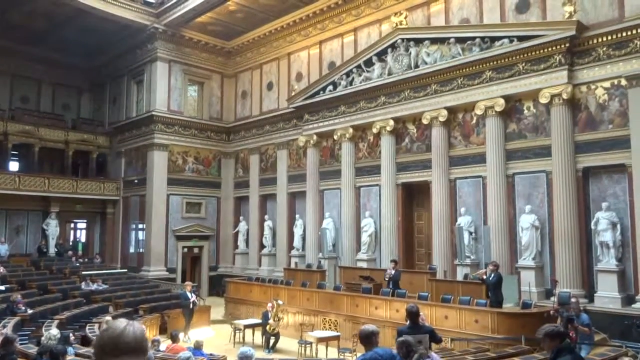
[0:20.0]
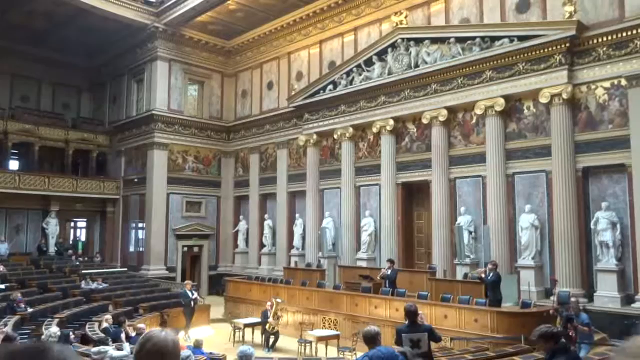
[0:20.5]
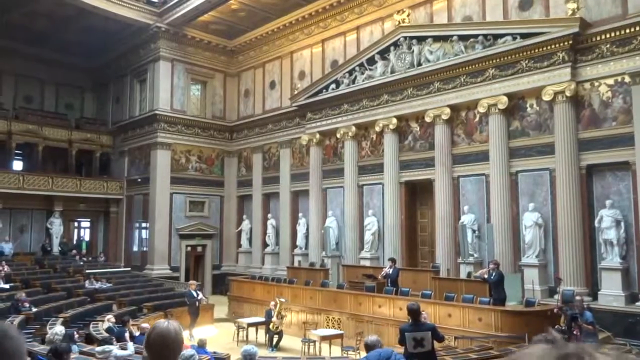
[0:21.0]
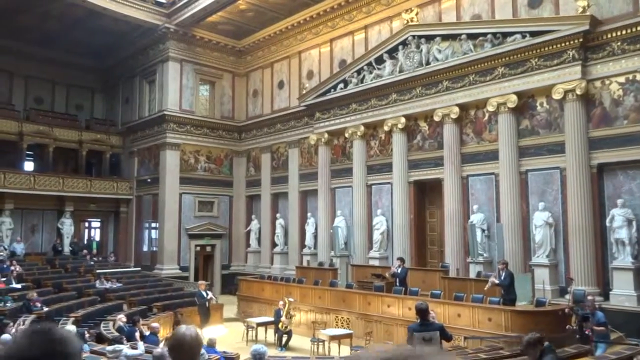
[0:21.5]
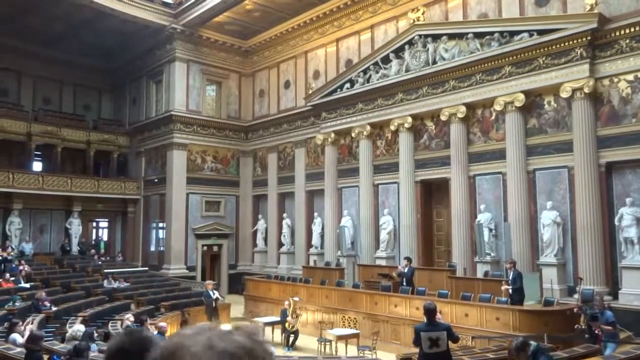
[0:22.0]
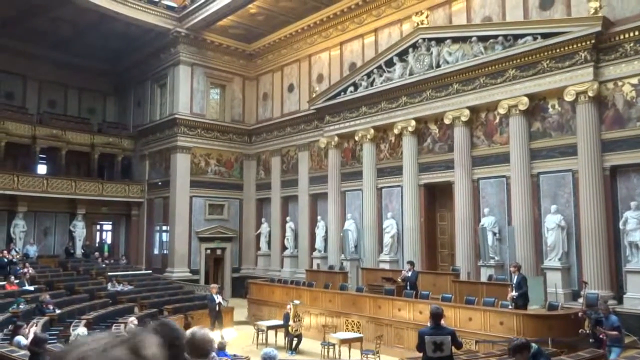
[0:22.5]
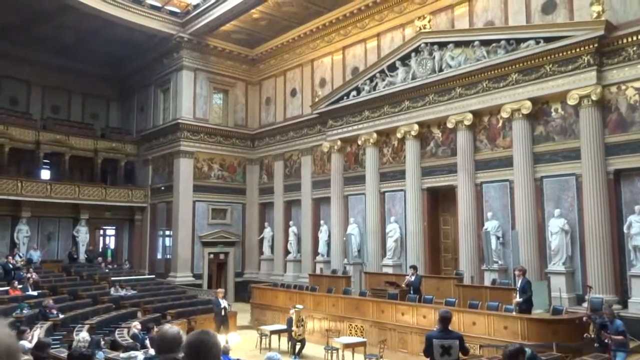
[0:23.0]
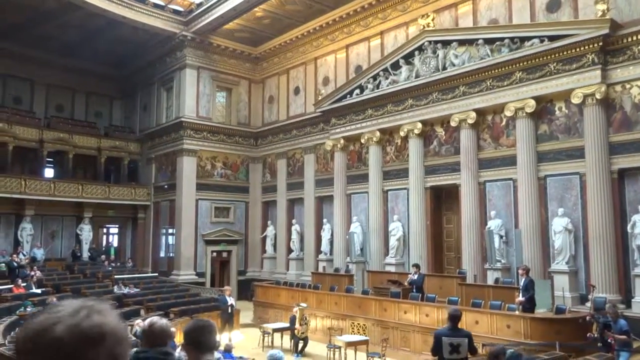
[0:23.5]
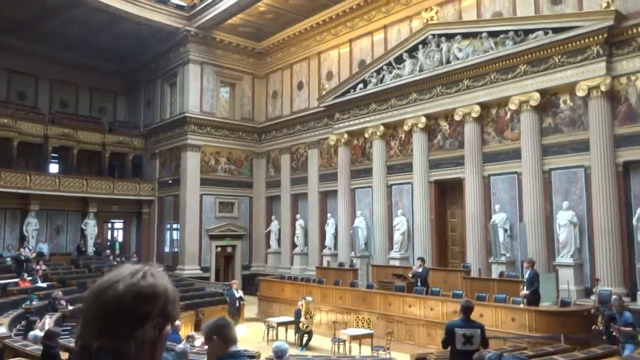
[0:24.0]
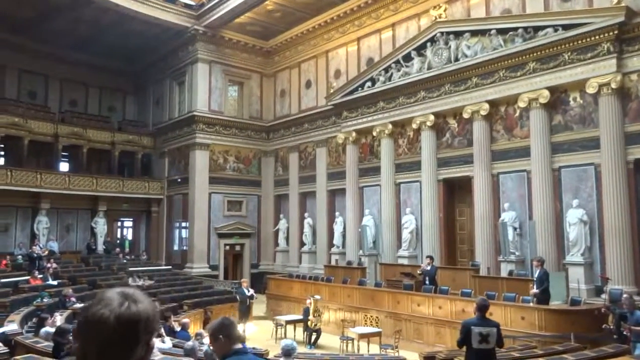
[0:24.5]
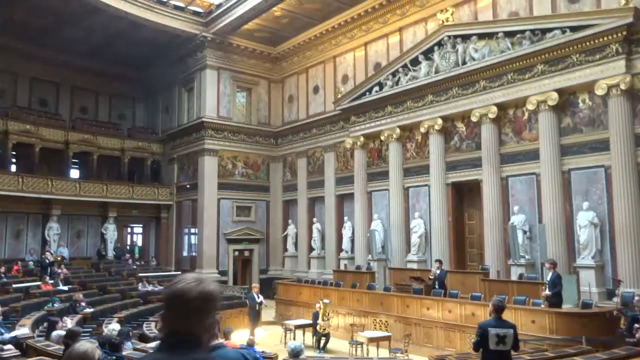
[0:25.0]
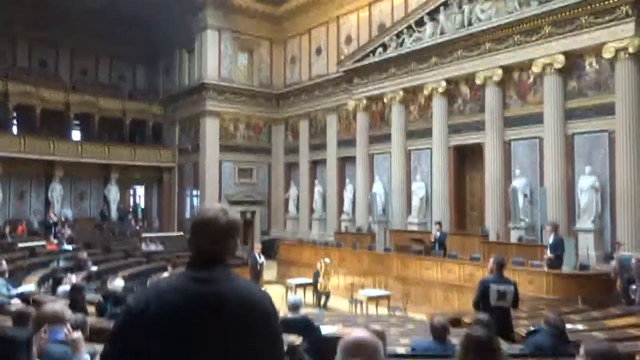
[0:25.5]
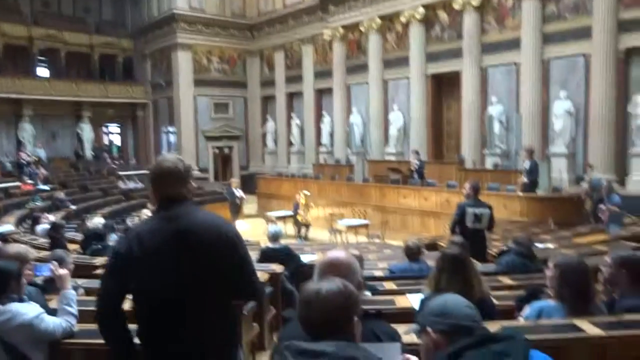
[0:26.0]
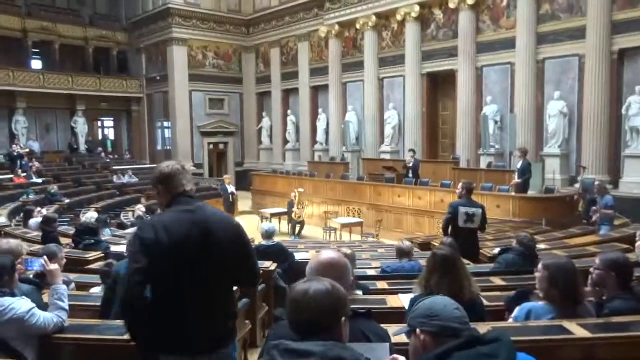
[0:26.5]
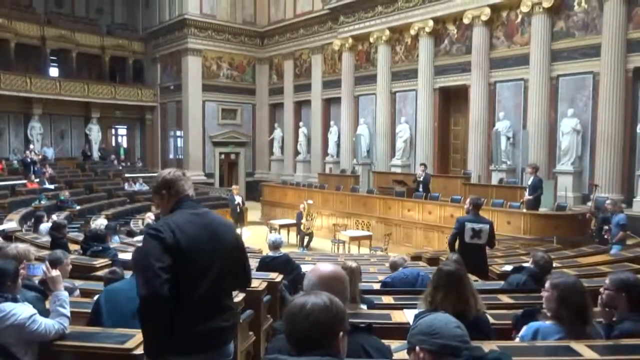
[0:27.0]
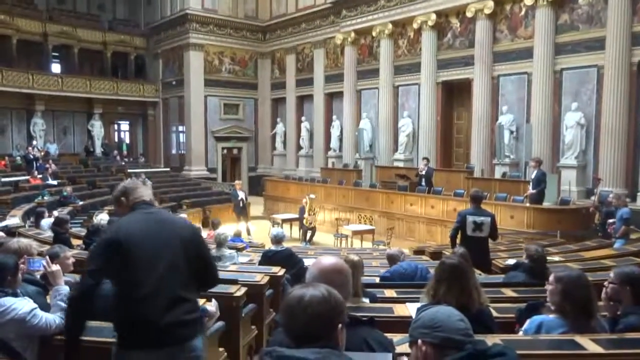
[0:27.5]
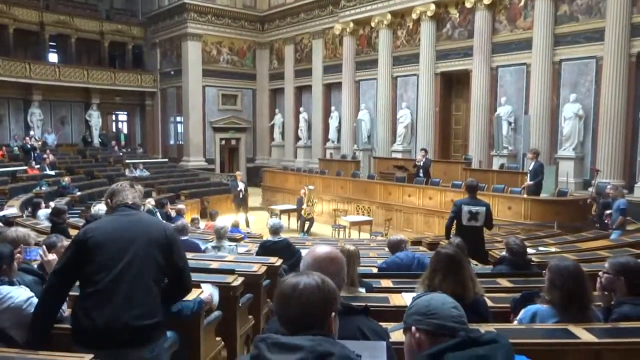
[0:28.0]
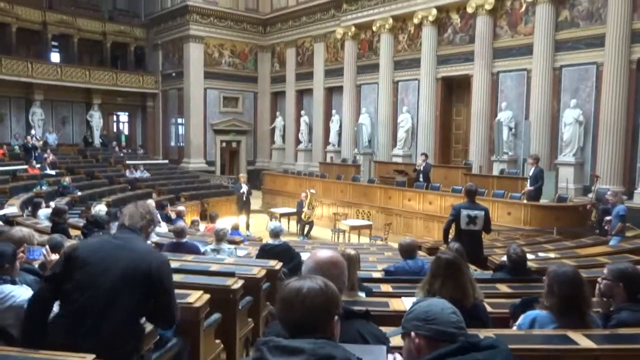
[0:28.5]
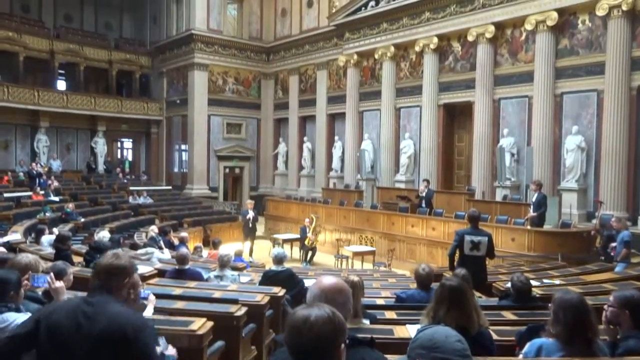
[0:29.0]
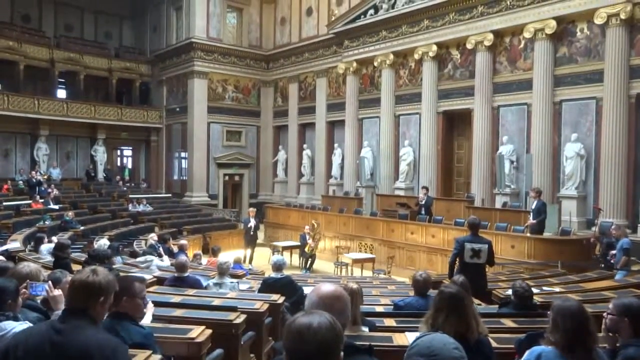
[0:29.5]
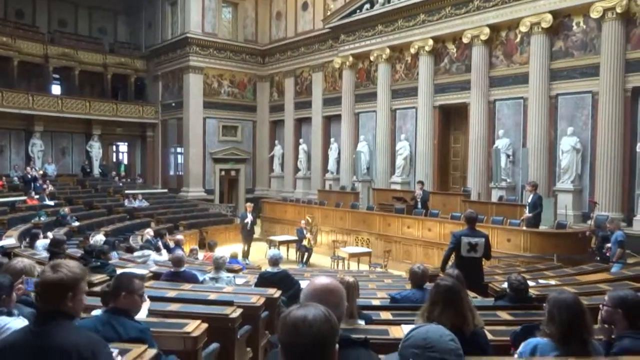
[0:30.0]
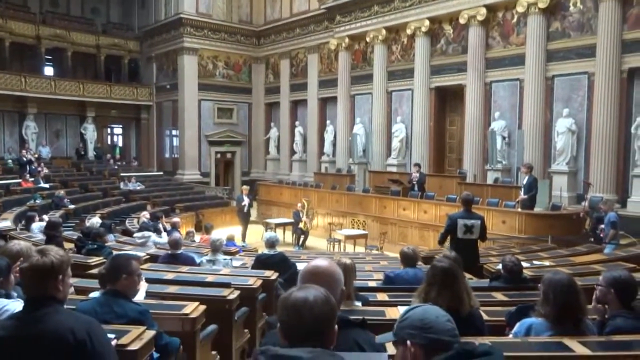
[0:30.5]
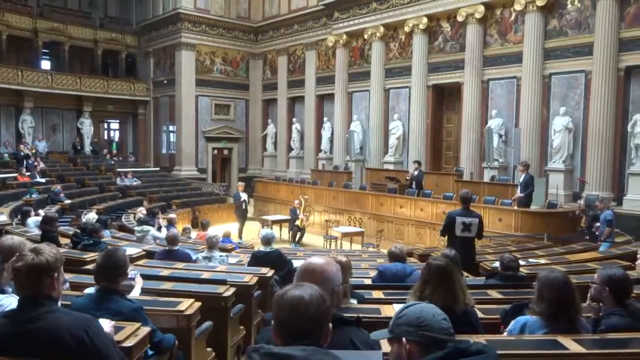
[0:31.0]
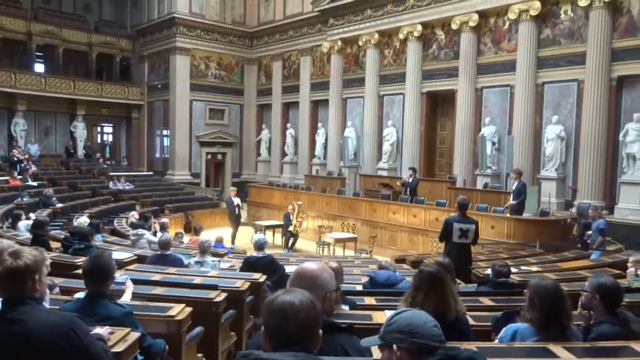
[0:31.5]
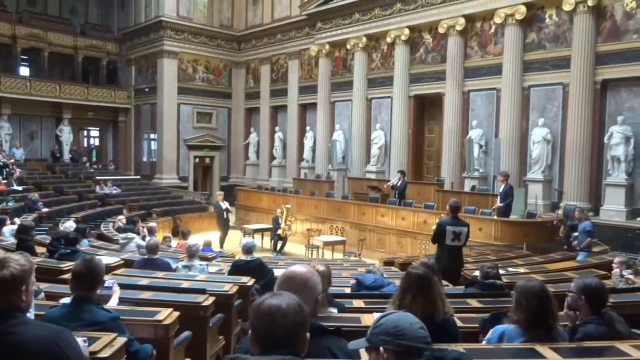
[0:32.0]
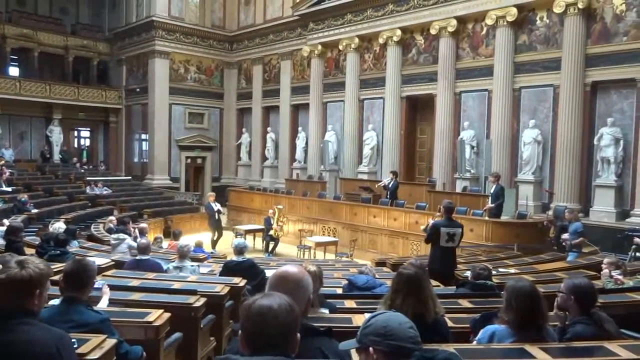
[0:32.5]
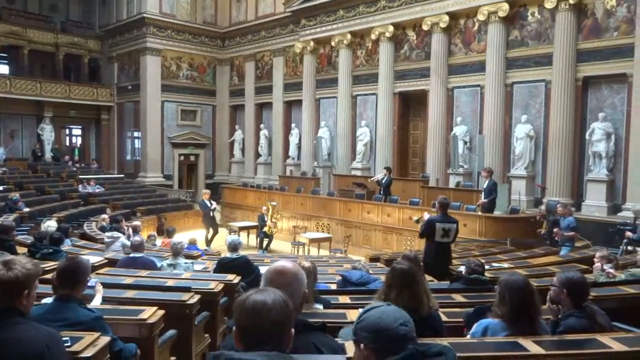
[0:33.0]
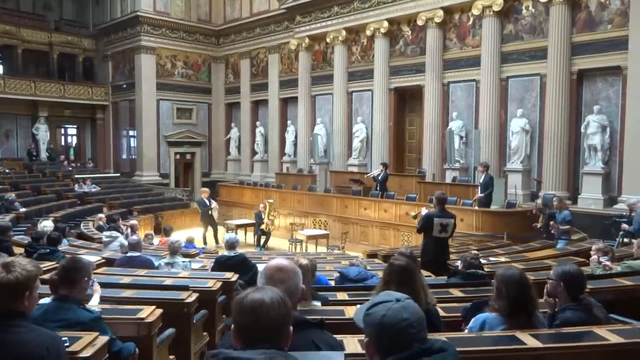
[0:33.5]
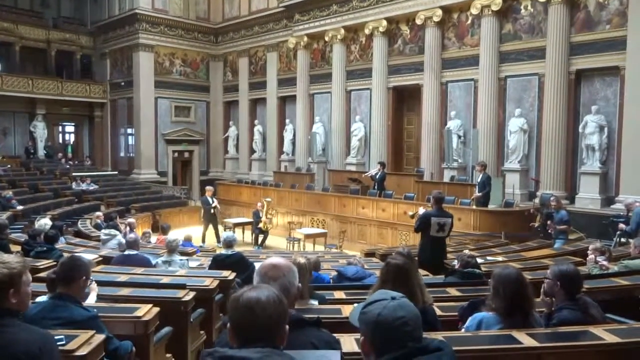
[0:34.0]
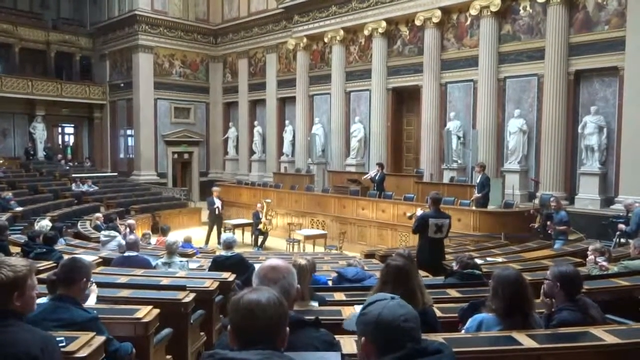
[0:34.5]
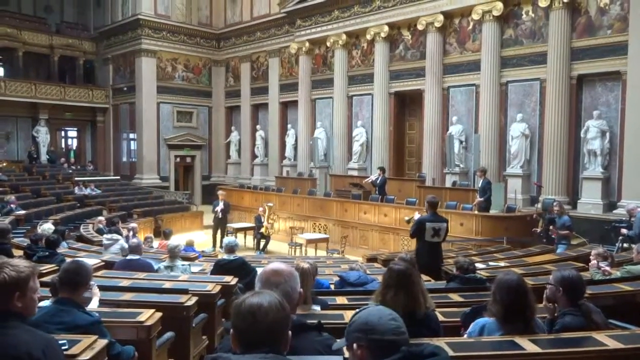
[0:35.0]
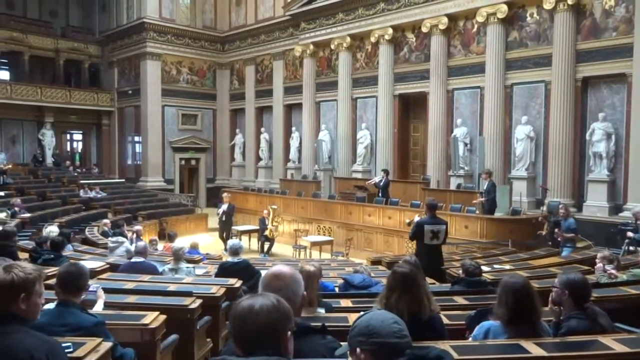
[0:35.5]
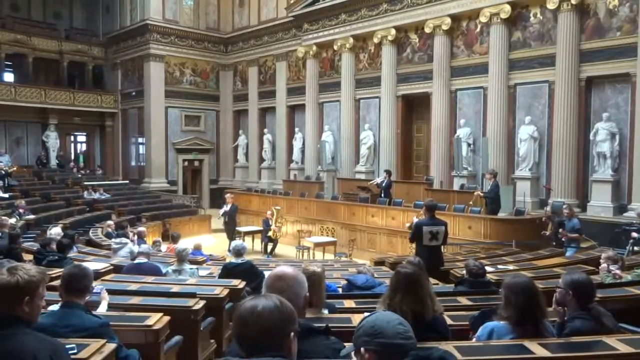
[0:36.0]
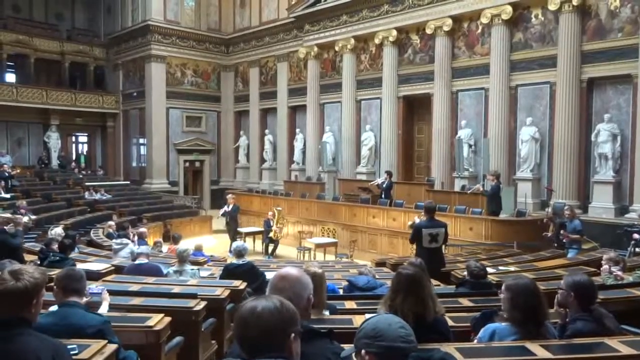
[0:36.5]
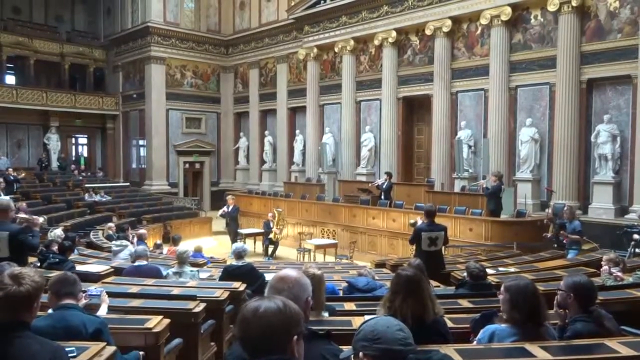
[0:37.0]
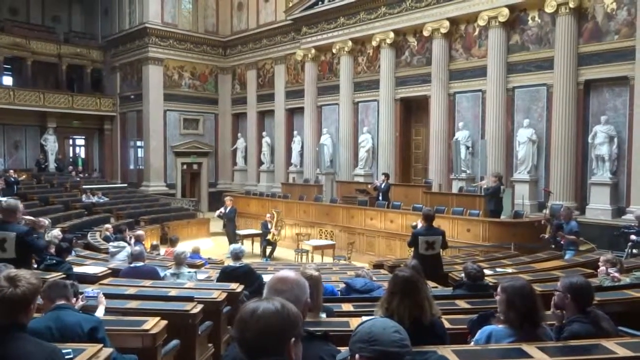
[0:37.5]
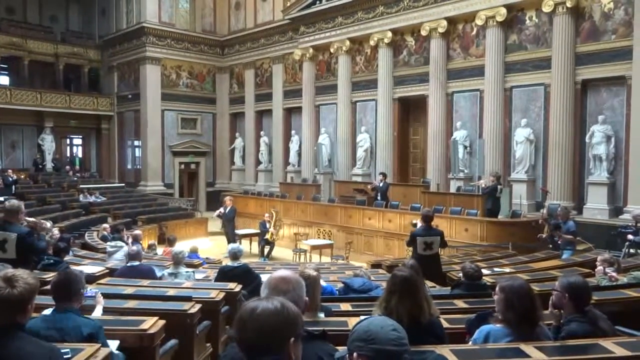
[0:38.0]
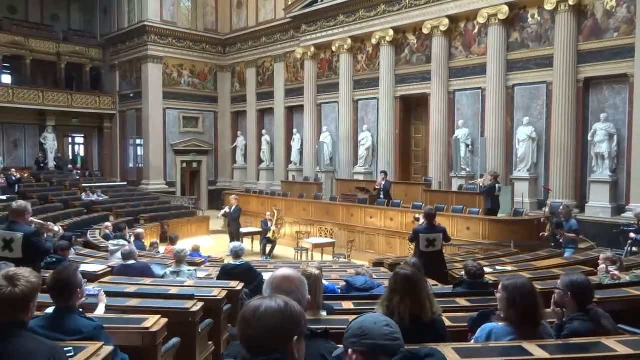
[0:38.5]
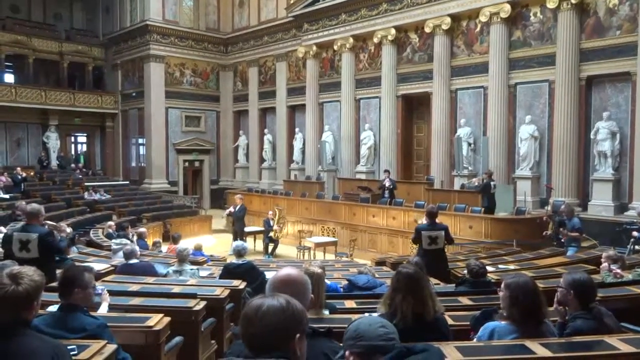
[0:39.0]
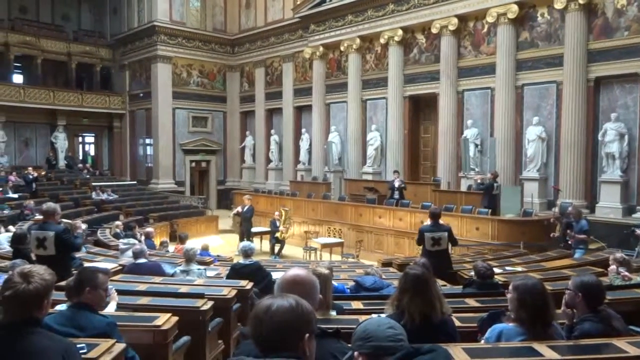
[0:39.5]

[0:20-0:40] One person is behind the chairs in front of the big podium, facing to the left. Down and to the right of them, another person in the front podium area is playing a trumpet or a saxophone; they are in the distance, so it is hard to tell. Below them are about four or five people, with only a bit of their shoulders and the backs of their heads visible. In the center of the floor, where there are a couple of tables, a man sits playing the trombone. A man to his left looks like he might be playing an instrument too, but he is far away and it is hard to tell. To the left of him are the rows of black chairs, where a few people are sitting. A couple more people file in from the bottom near the left as the camera moves down to the left, and the backs of a bunch of people's heads become visible across the bottom. The man with the jacket with the X on the back is still standing, while most of the other people have sat back down. A couple of people hold up camera phones recording what is going on as one more man files in and sits down toward the bottom left corner. The man with the coat is now playing some sort of musical instrument as well, leaning back as he plays. Another man in a black coat with an X comes in playing a trumpet or trombone, a long skinny instrument played with the mouth.